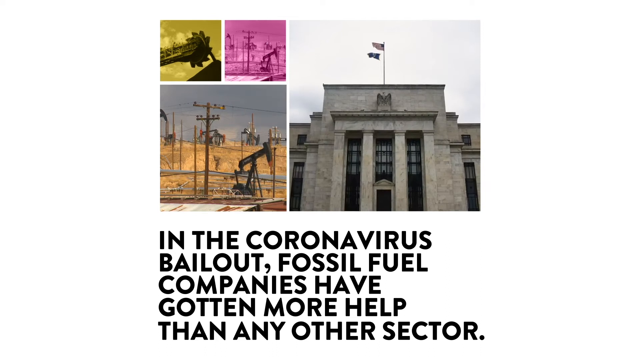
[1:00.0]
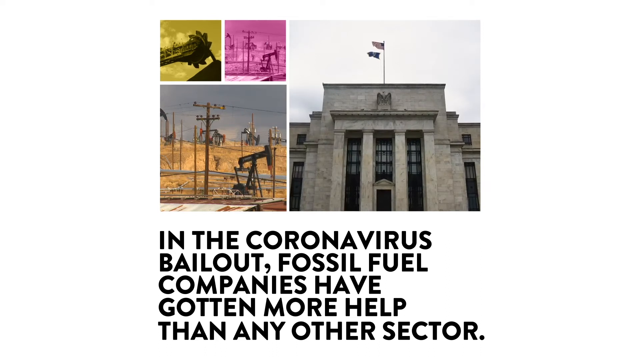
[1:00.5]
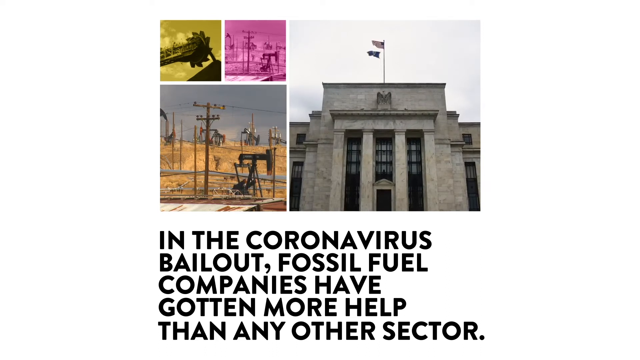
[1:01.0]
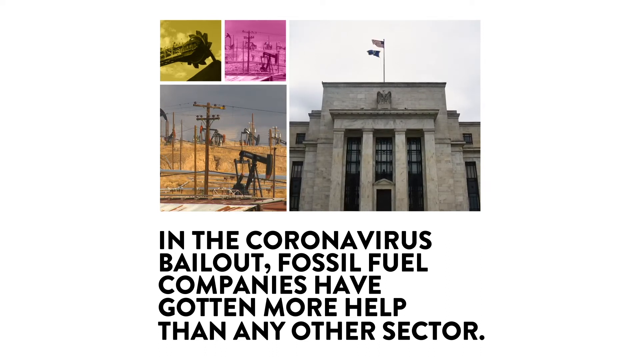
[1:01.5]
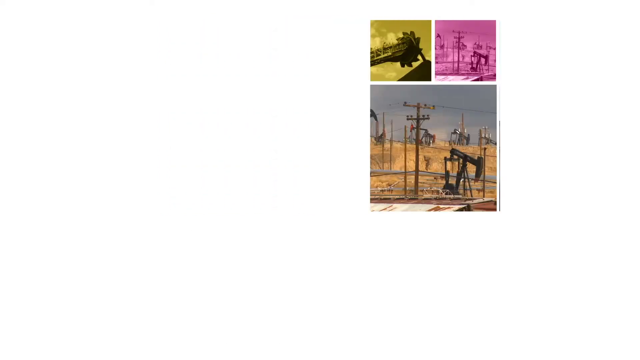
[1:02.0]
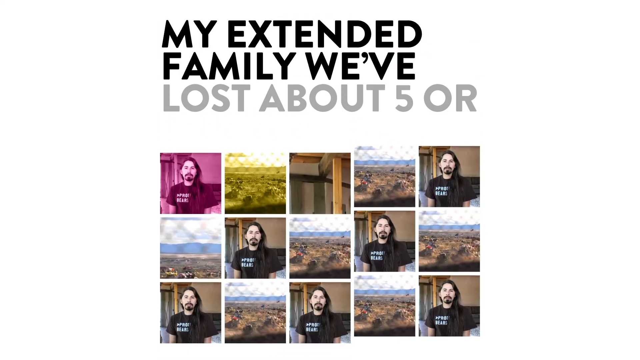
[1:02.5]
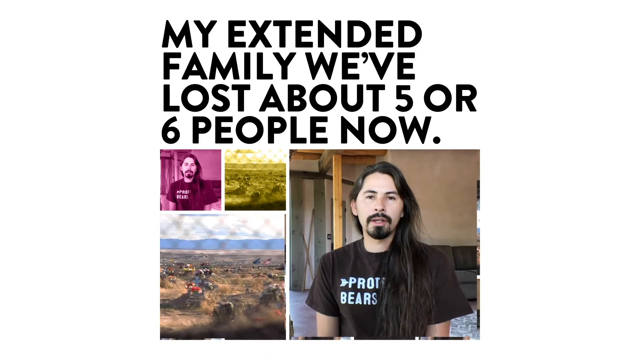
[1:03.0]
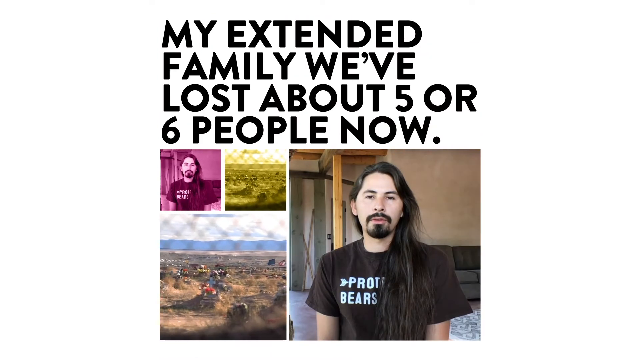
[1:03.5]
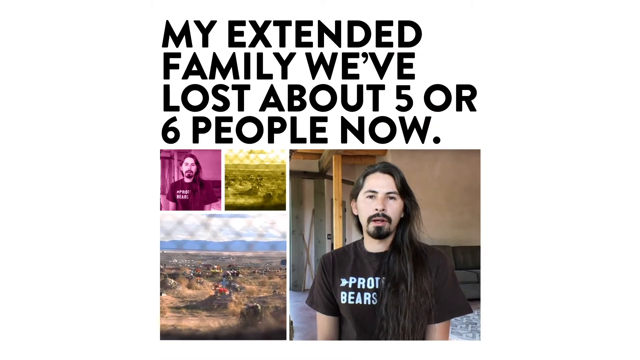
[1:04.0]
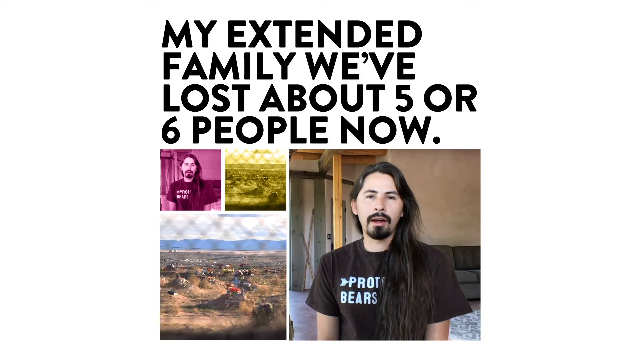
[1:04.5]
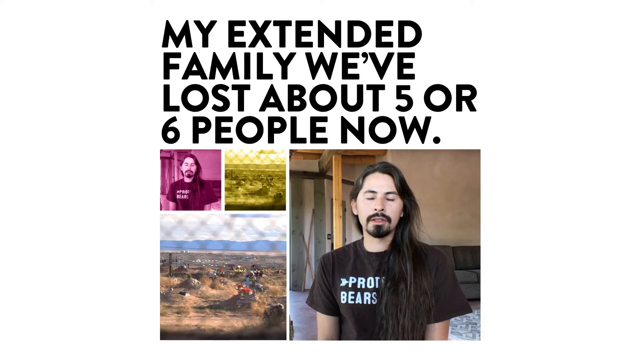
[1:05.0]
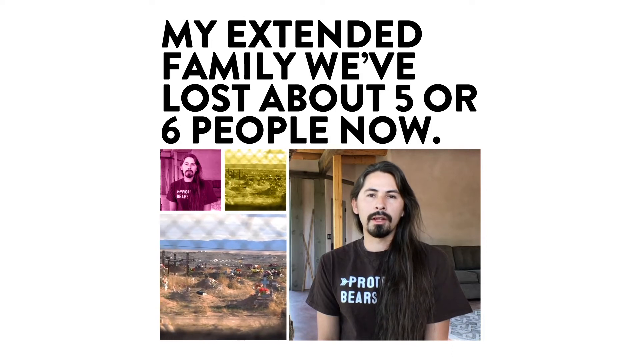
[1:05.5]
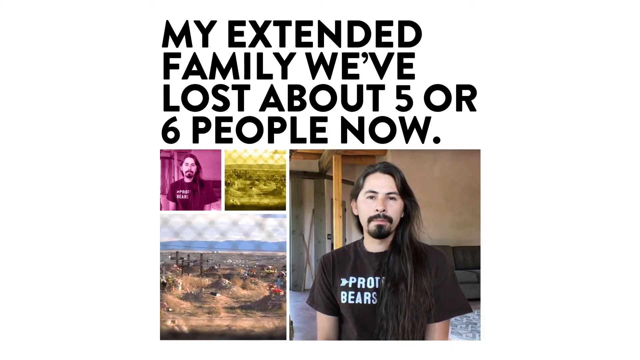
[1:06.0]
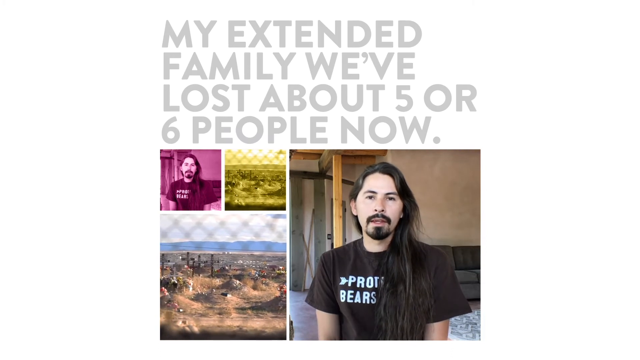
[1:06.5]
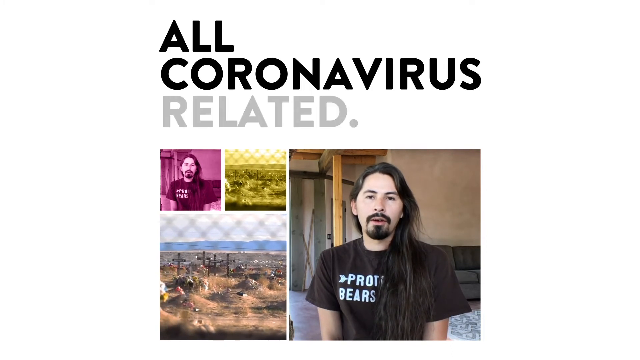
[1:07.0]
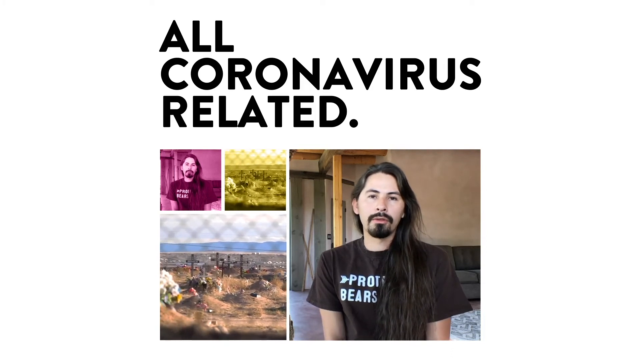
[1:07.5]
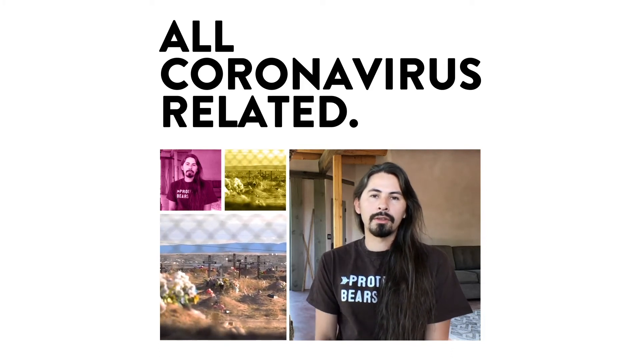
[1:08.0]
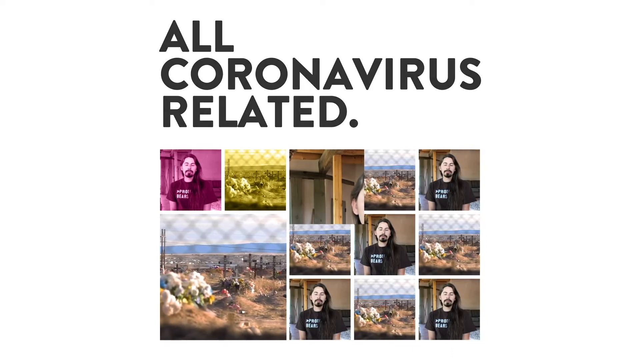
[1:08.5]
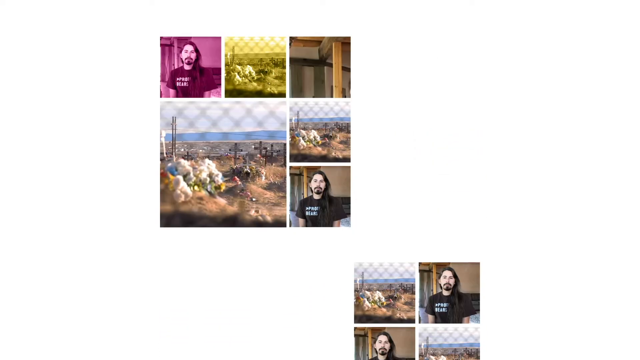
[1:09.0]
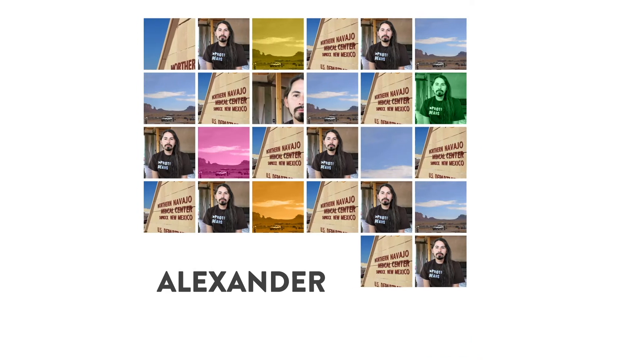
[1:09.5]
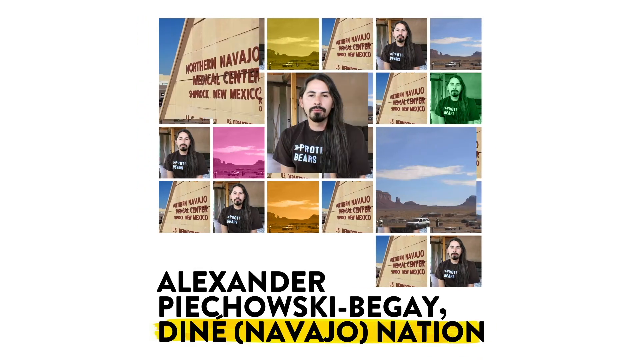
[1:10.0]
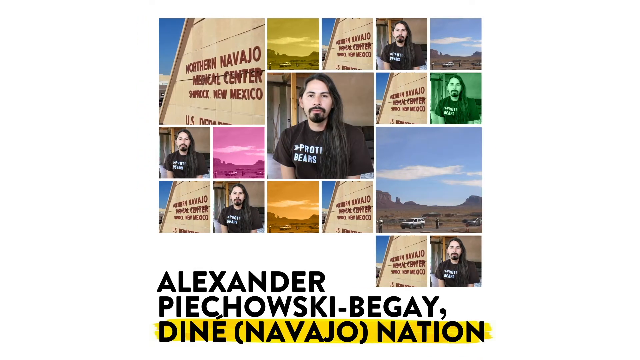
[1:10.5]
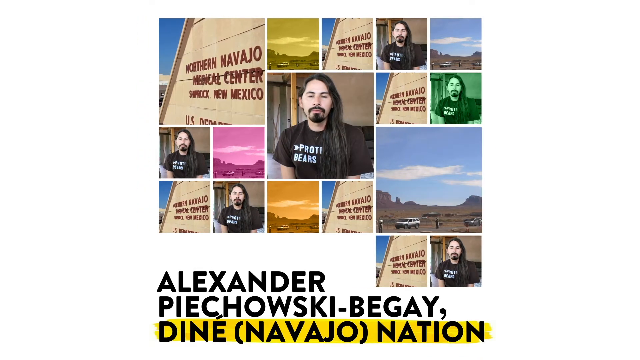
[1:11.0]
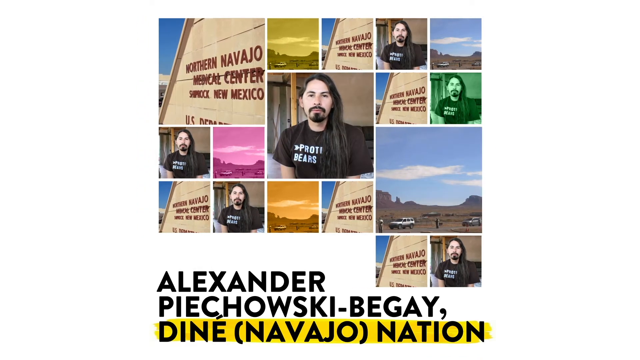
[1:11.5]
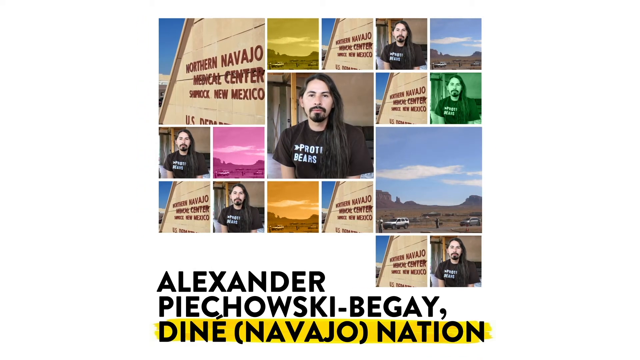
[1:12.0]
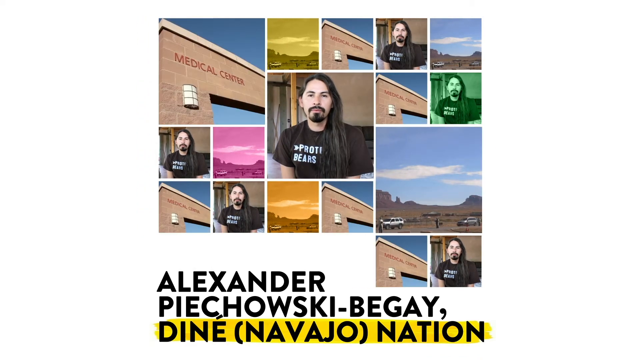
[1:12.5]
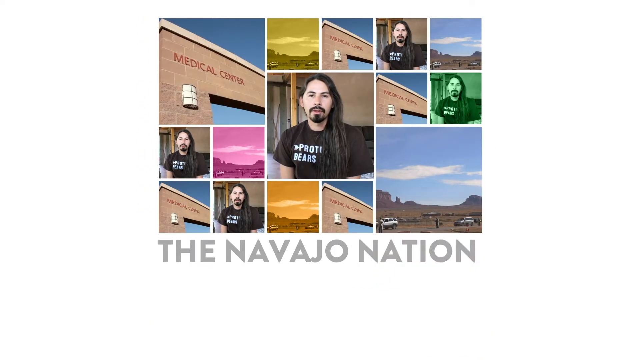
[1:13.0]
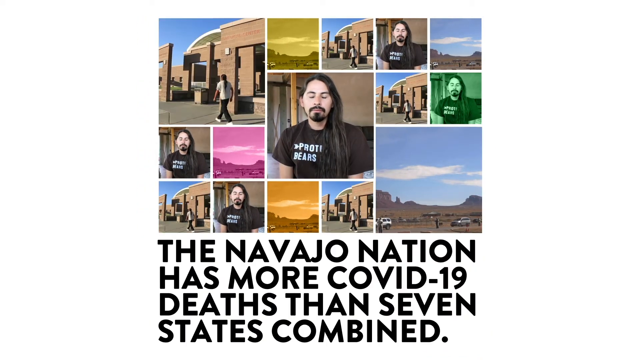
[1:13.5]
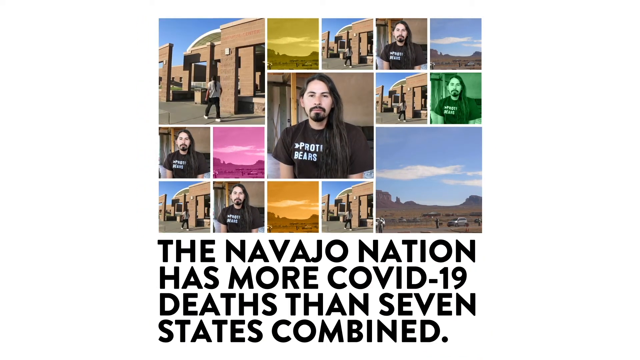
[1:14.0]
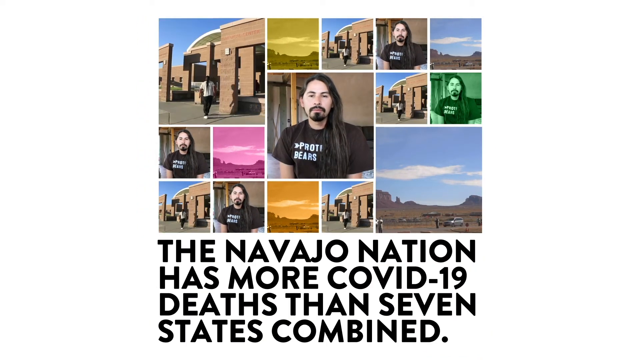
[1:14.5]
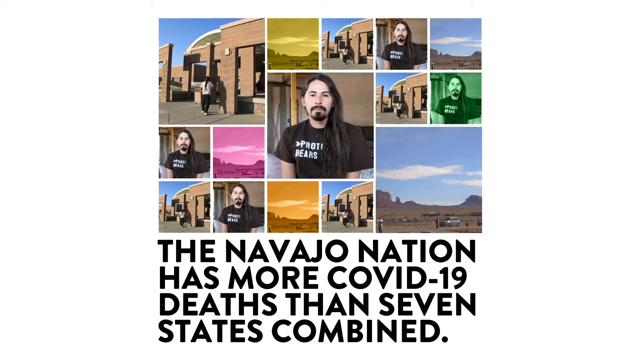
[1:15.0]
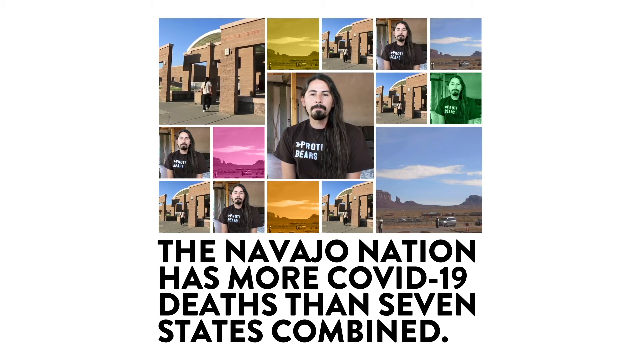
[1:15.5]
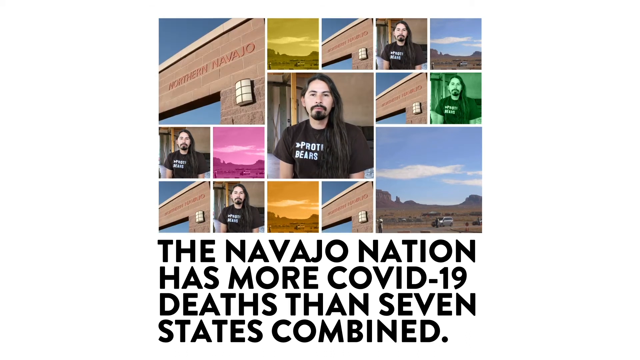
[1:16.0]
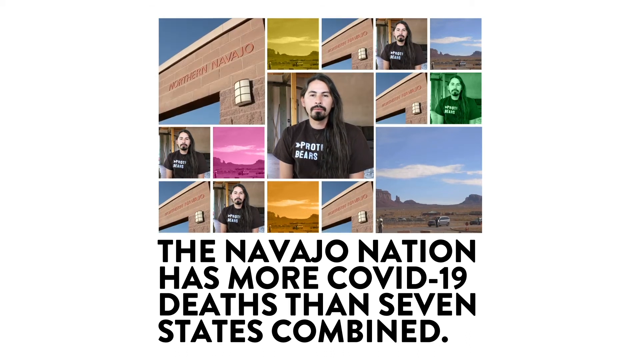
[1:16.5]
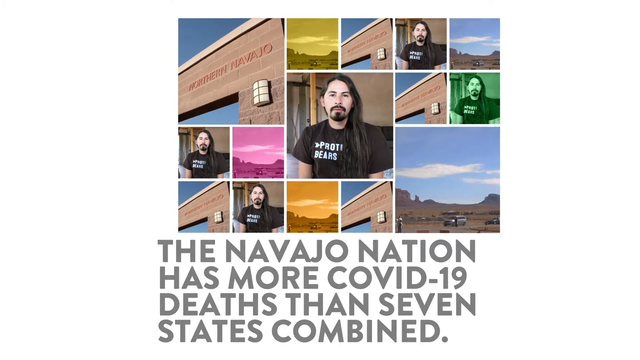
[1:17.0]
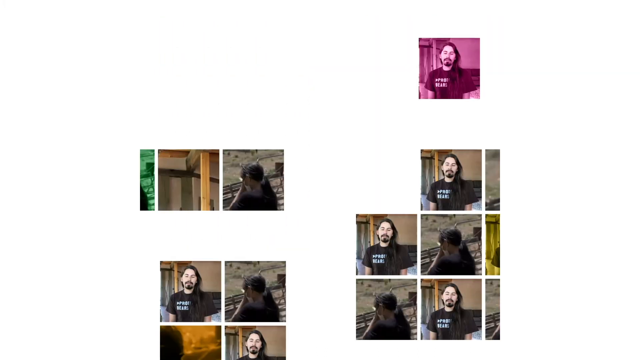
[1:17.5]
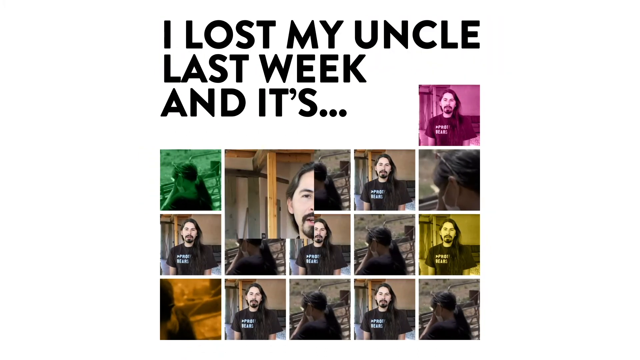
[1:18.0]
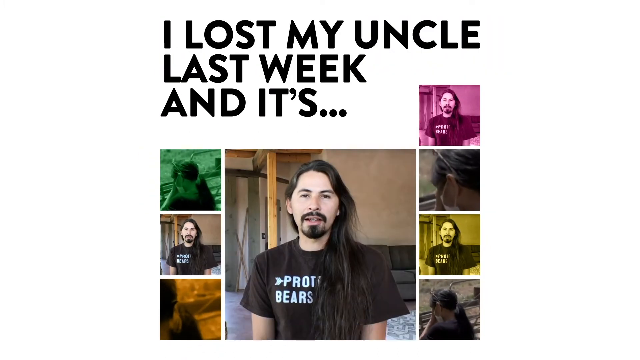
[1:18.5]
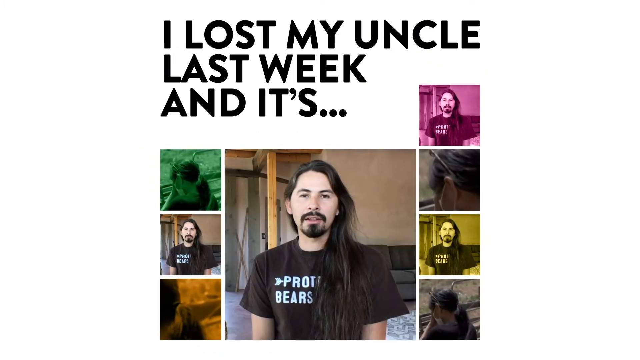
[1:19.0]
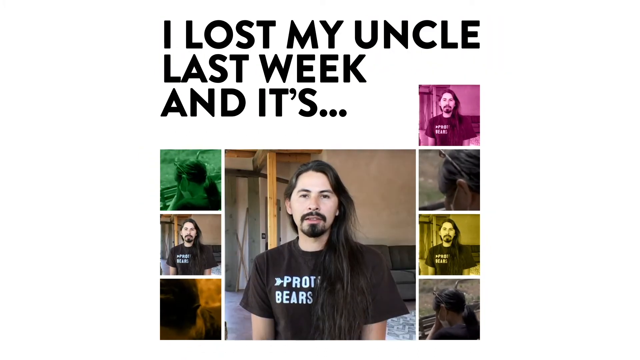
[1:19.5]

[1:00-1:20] It begins with what looks like a bank and an oil field being drilled. A man from the Navajo Nation appears. A cemetery is then shown, apparently where people were buried.